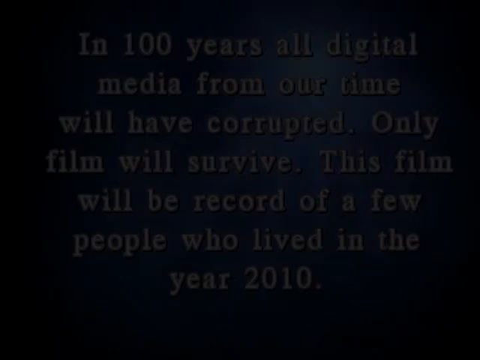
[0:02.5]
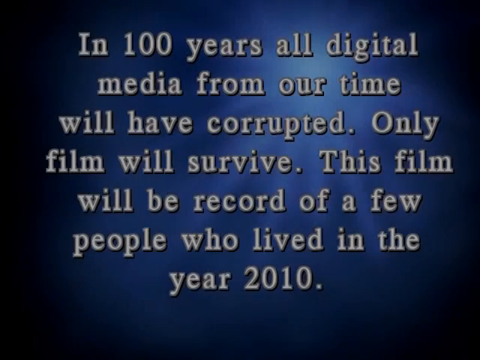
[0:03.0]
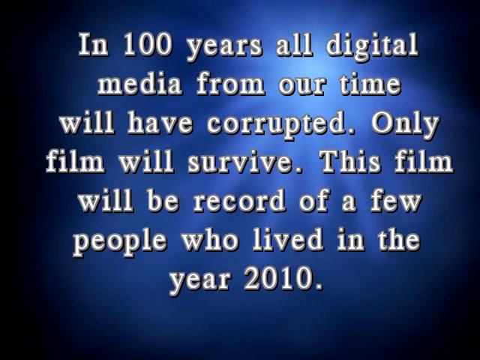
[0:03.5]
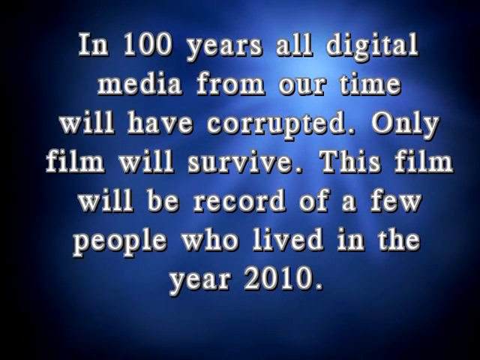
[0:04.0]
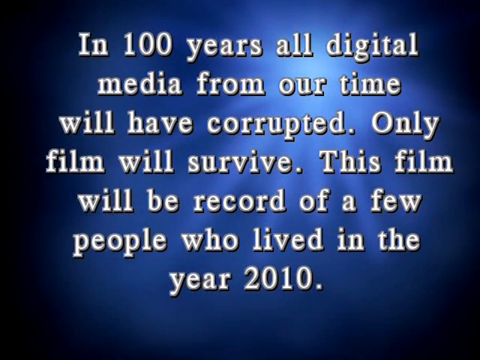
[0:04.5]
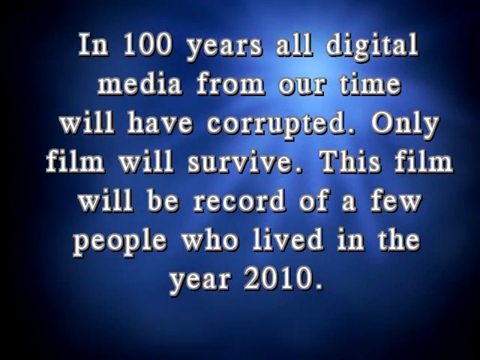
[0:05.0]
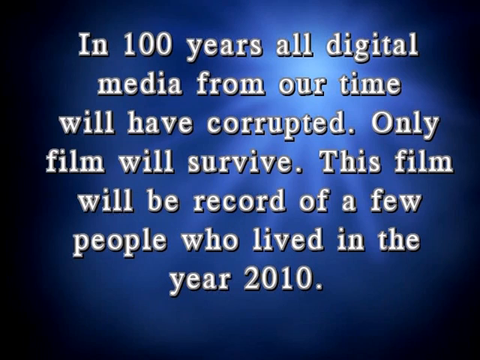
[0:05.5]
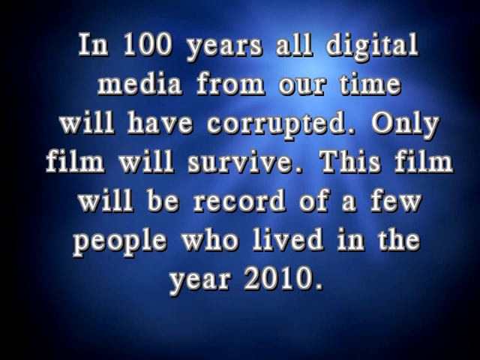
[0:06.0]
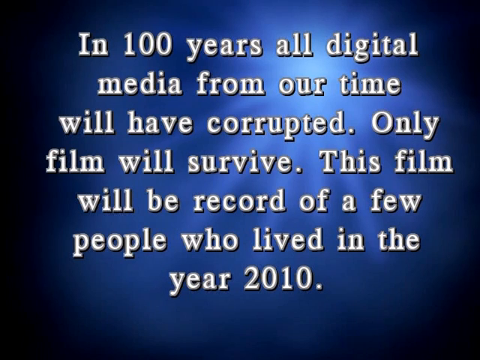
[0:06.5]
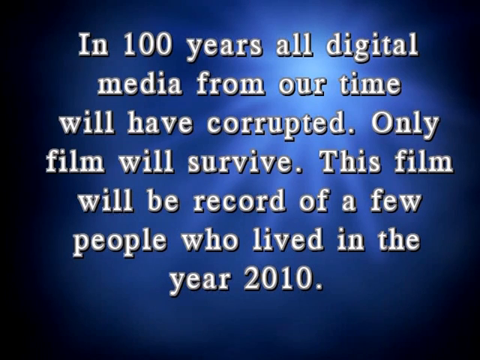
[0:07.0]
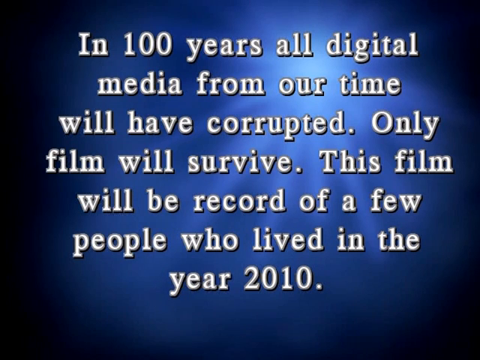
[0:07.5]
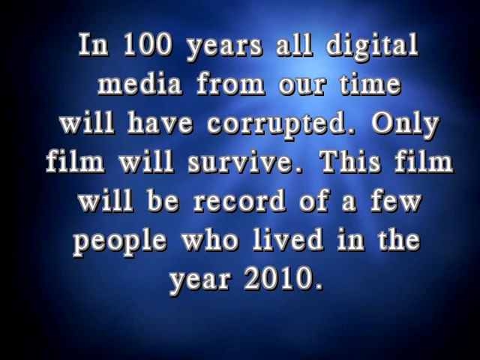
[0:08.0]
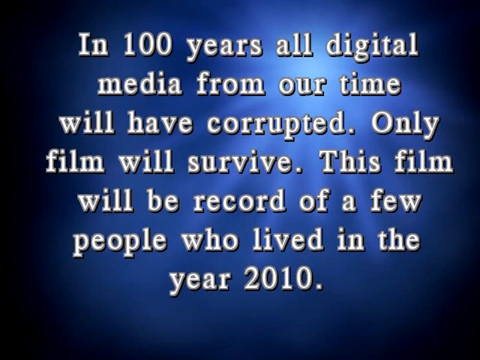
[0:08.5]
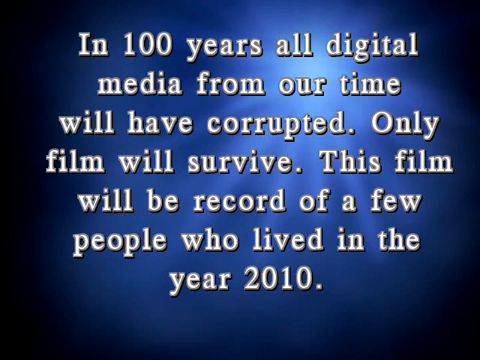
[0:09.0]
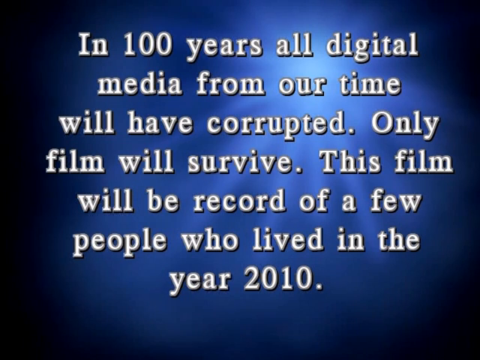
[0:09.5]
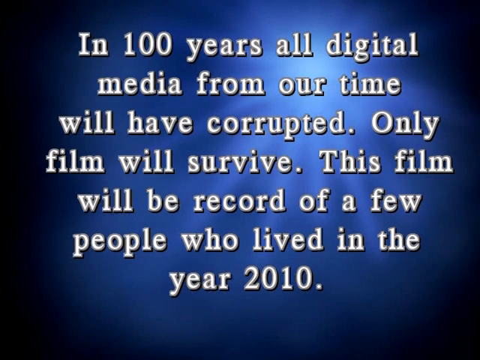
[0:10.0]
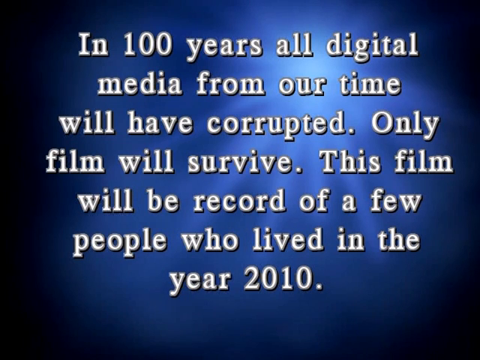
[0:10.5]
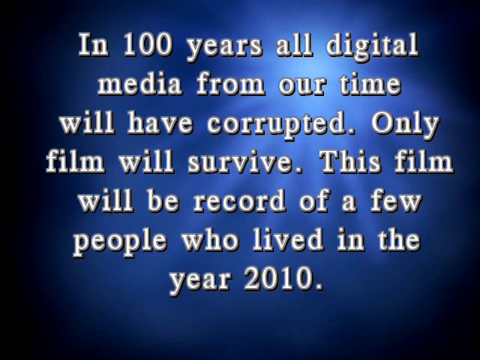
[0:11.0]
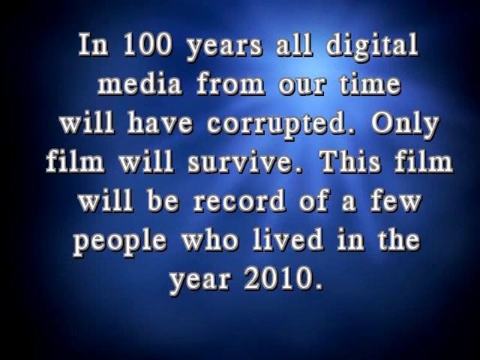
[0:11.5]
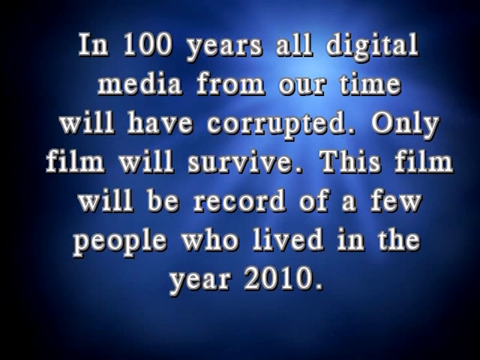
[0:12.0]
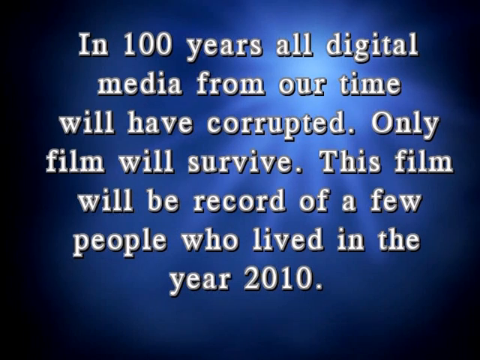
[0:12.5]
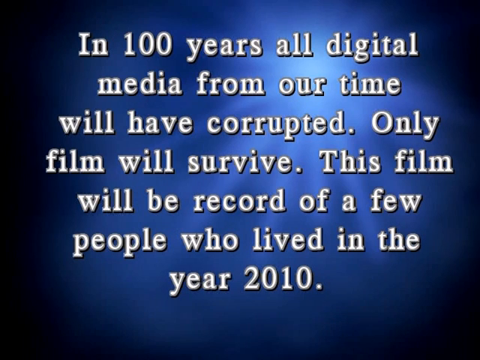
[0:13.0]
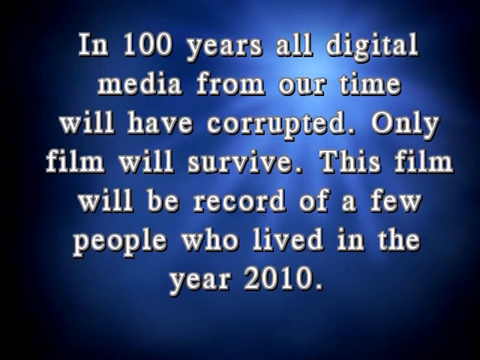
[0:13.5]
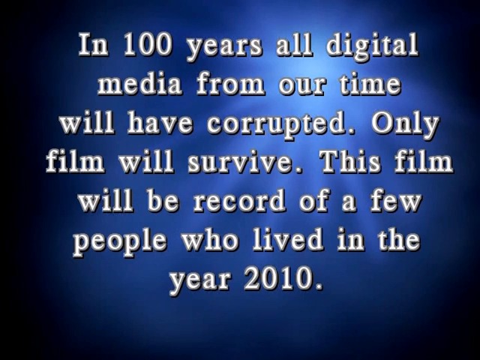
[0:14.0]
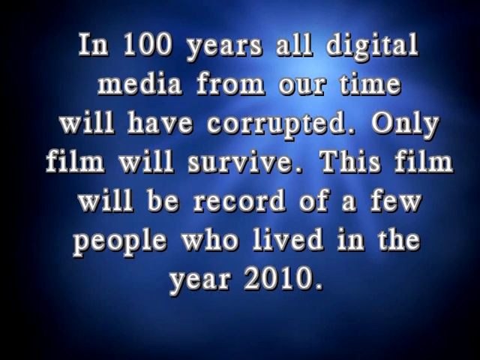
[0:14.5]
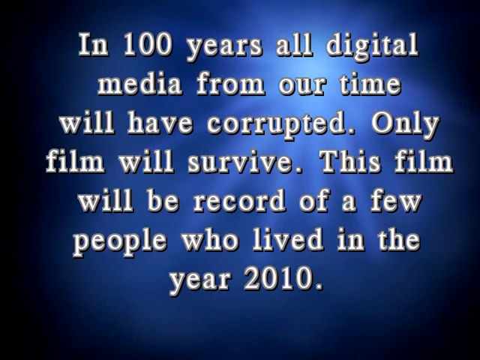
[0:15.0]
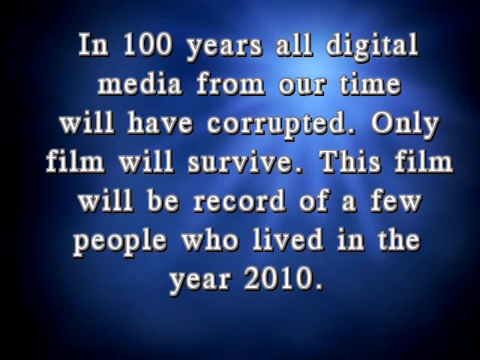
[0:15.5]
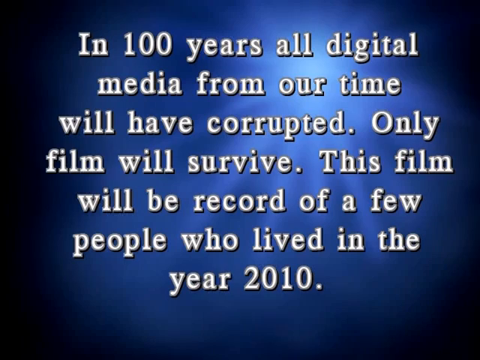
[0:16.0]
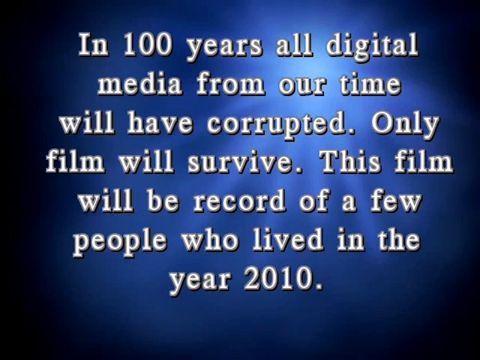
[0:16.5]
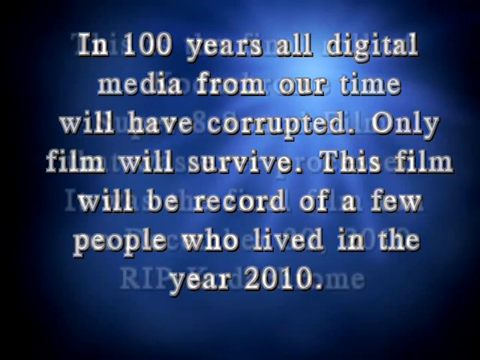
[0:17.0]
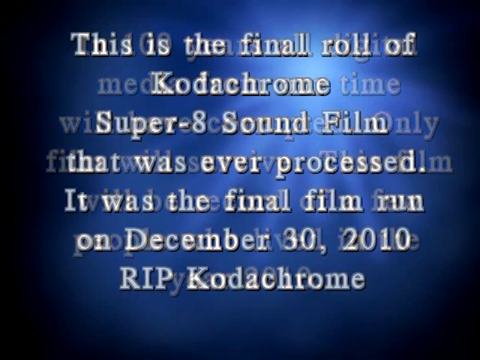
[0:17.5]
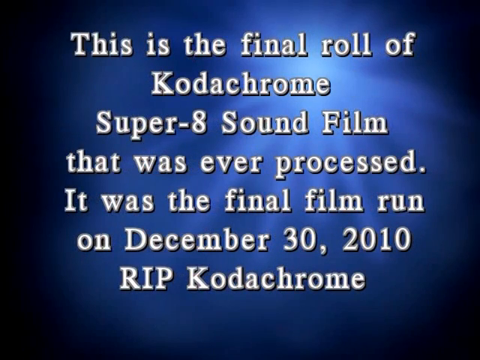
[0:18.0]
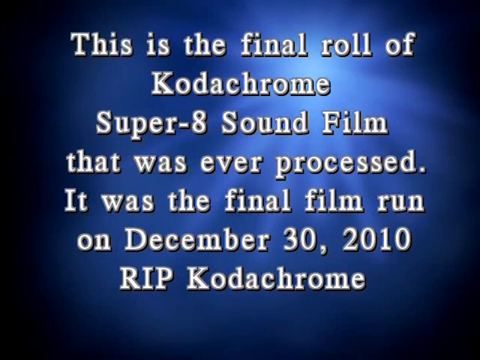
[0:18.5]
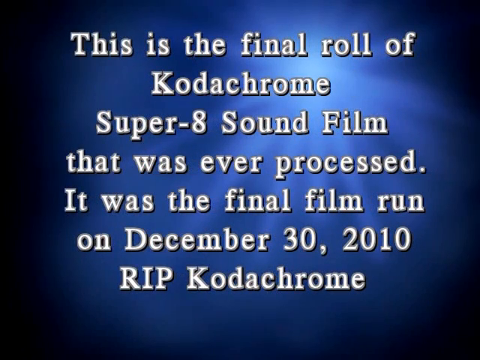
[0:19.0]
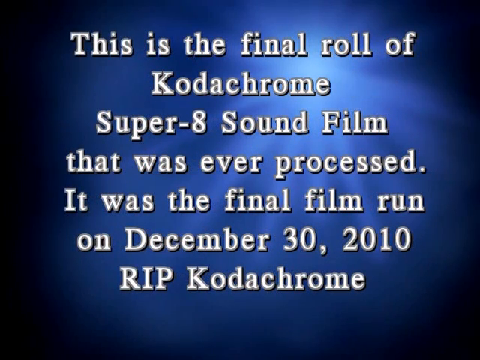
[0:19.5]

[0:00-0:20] The video opens on an all-black background that, from the inside out, becomes dark blue, except for the top right corner, the bottom right corner and down the left side, which stay black. Right up at the center, about two inches from the top, the blue is a little lighter and kind of rays out, while the rest is darker blue. Somewhat ominous white text with a black border appears in seven lines: "In 100 years, all digital media from our time will have corrupted. Only film will survive. This film will be record of a few people who lived in the year 2010." It kind of fades out as another seven lines of white text with a black border come in: "This is the final roll of Kodachrome Super 8 sound film that was ever processed. It was the final film run on December 30, 2010, RIP Kodachrome."